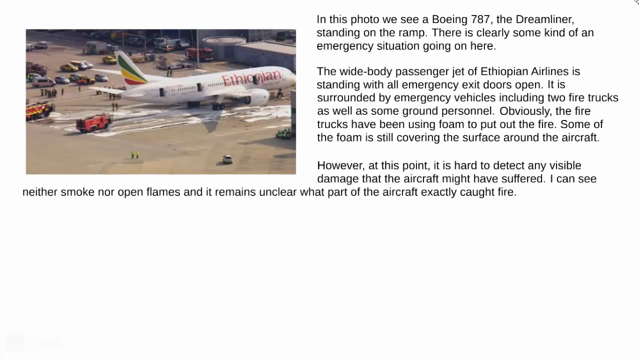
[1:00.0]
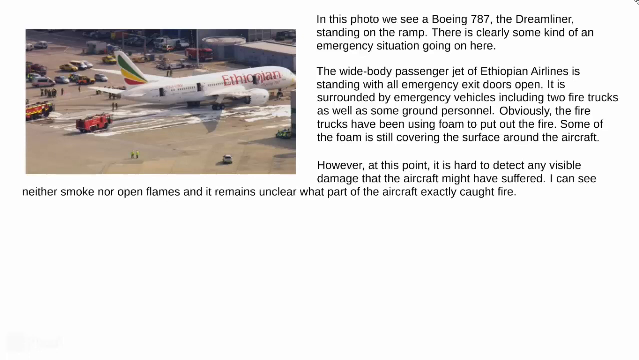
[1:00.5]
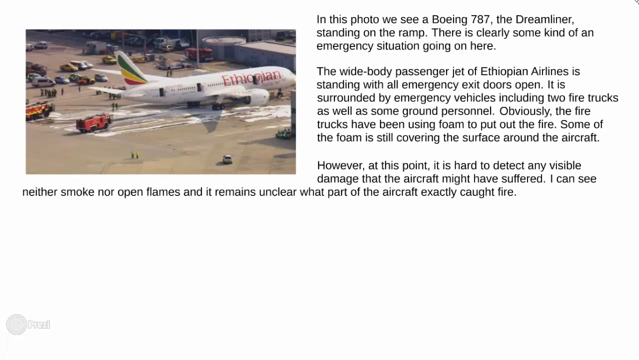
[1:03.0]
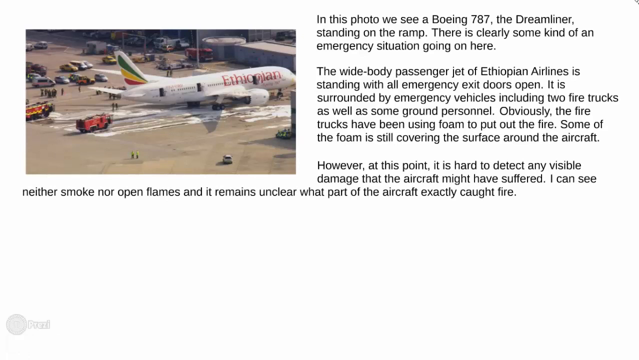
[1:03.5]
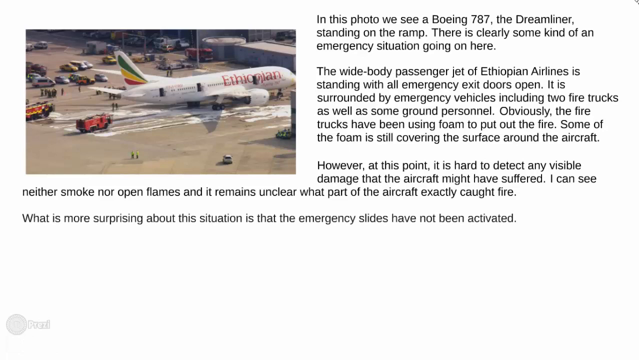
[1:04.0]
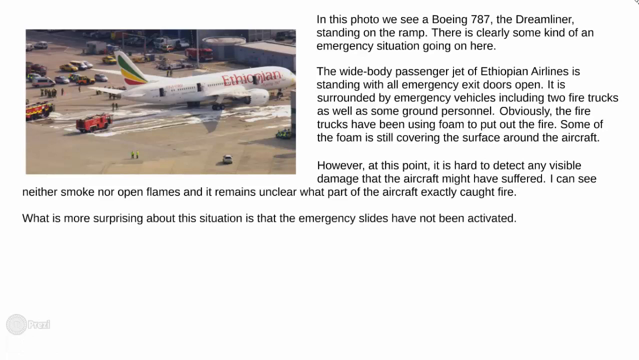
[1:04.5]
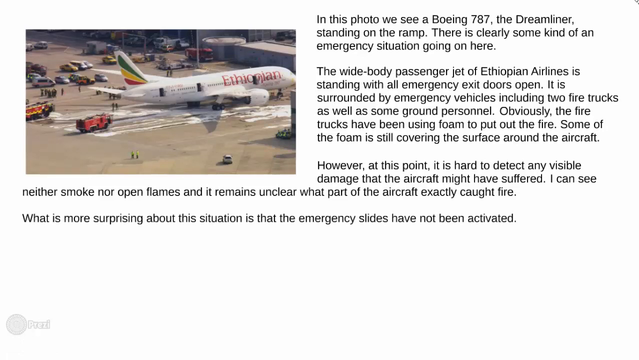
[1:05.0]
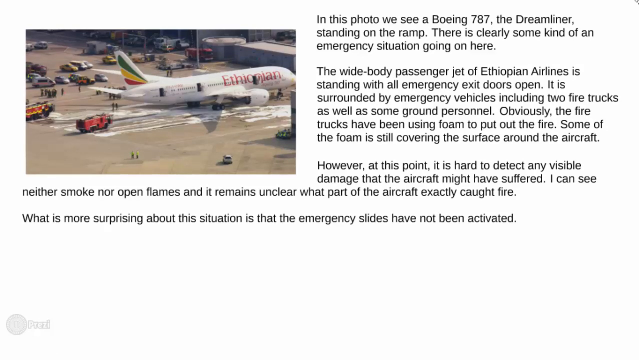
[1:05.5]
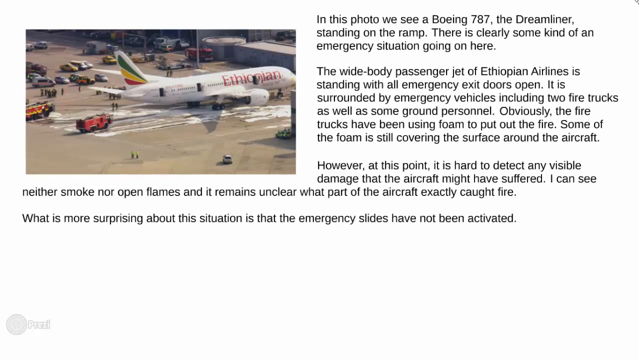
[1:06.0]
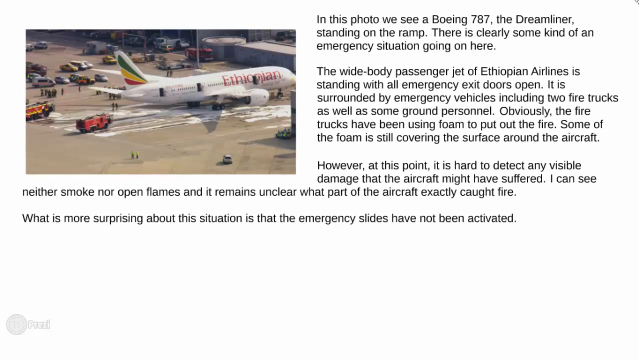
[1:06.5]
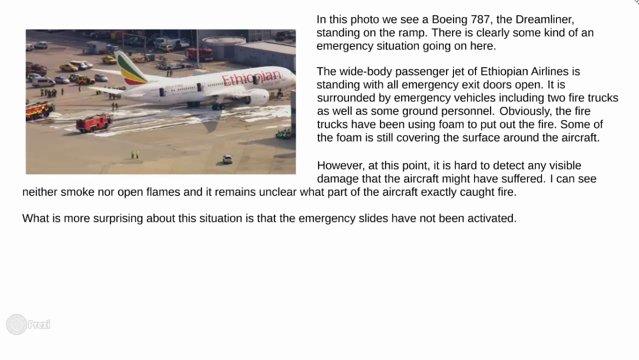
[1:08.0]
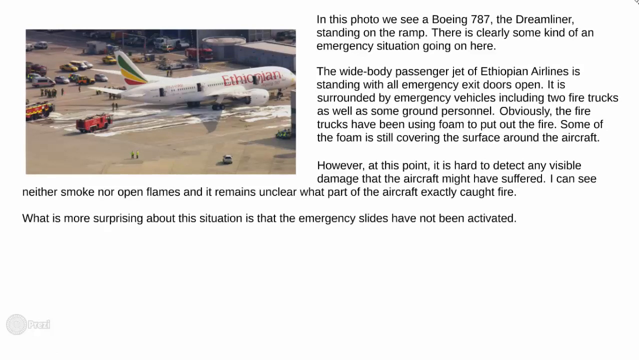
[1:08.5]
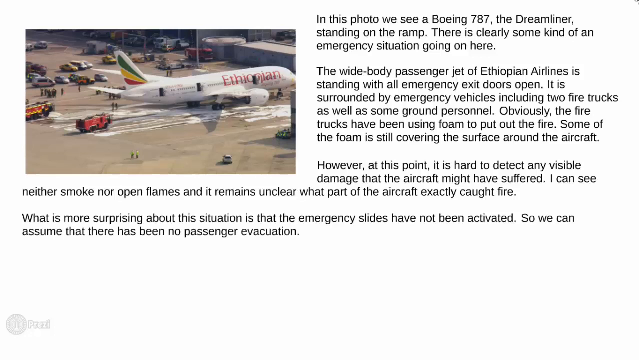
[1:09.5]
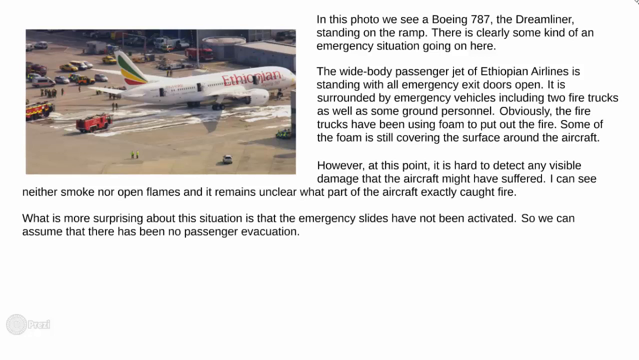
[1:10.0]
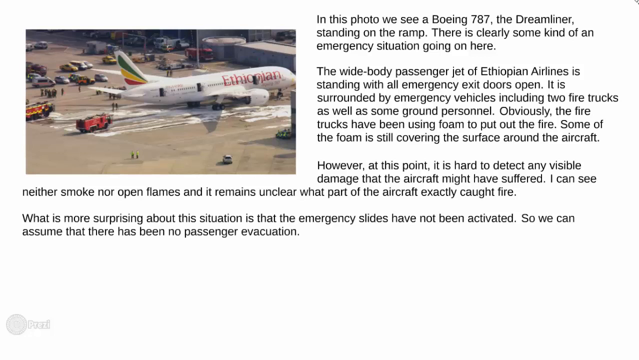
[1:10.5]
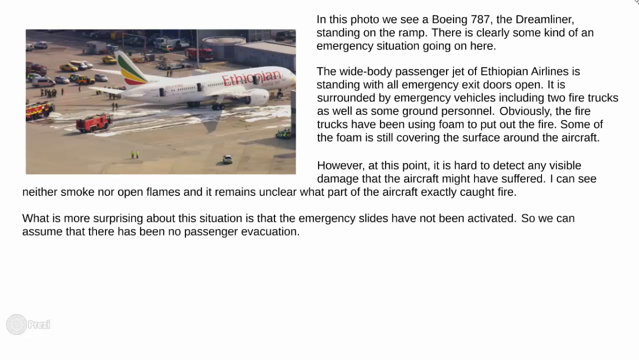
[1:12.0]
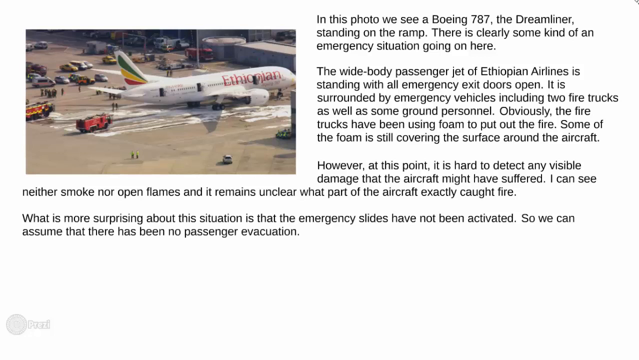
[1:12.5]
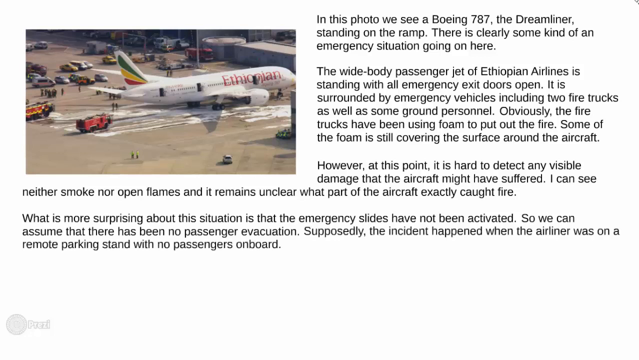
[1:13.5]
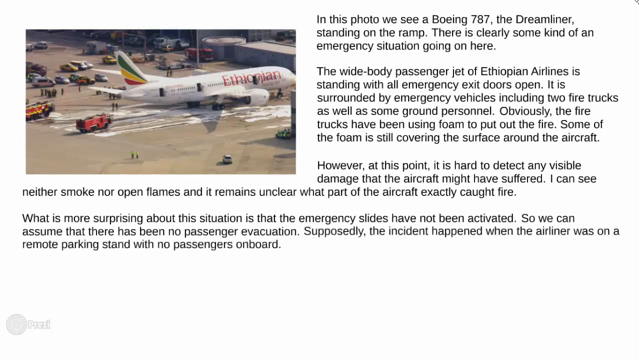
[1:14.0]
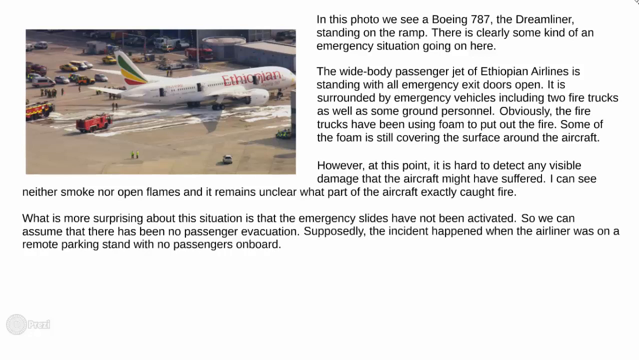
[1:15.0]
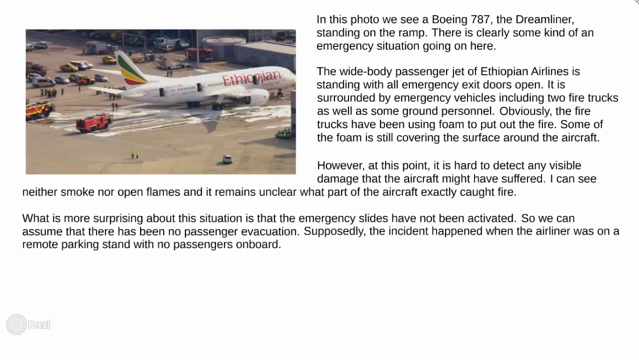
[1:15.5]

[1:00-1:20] The same picture of the airplane is in the upper left-hand corner, with more words next to it reading: "In this photo we see a Boeing 787 the Dreamliner standing on the ramp. There's clearly some kind of an emergency situation going on here. The wide-body passenger jet of Ethiopian Airlines is standing with all emergency exit doors open. It is surrounded by emergency vehicles including two fire trucks as well as some ground personnel. Obviously the fire trucks have been using foam to put out the fire. Some of the foam is still covering the surface around the aircraft. However, at this point it is hard to detect any visible damage that the aircraft might have suffered. I can see neither smoke nor open flames and it remains unclear what part of the aircraft exactly caught fire. What is more surprising about the situation is that the emergency slides have not been activated so we can assume that there has been no passenger evacuation. Supposedly the incident happened when the airliner was on a remote parking stand with no passengers on board."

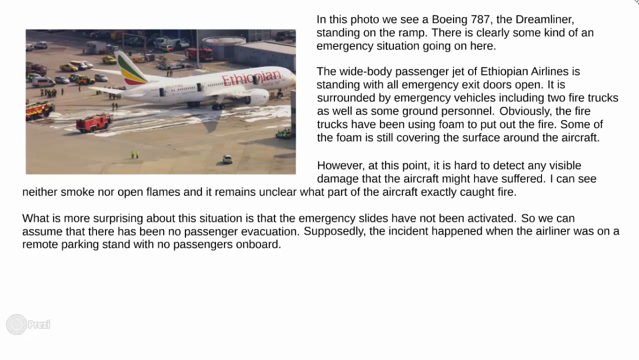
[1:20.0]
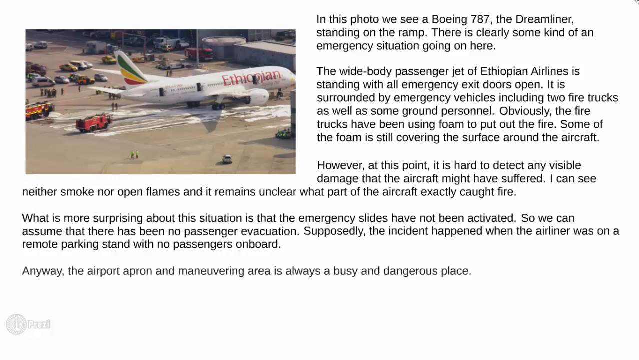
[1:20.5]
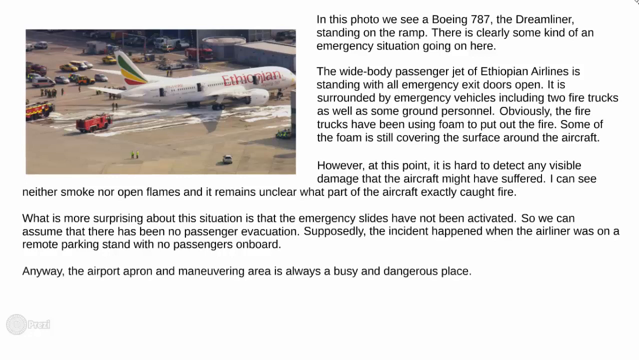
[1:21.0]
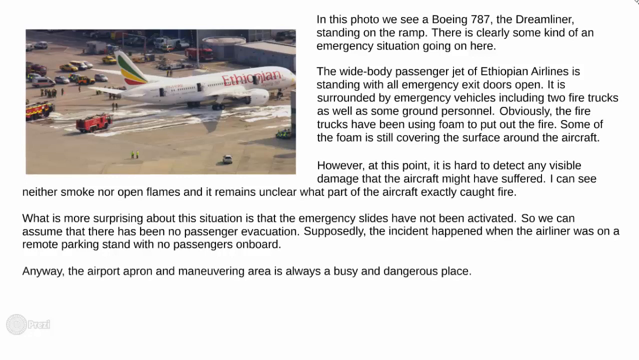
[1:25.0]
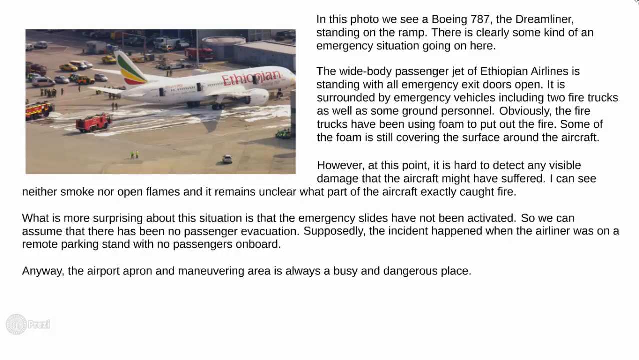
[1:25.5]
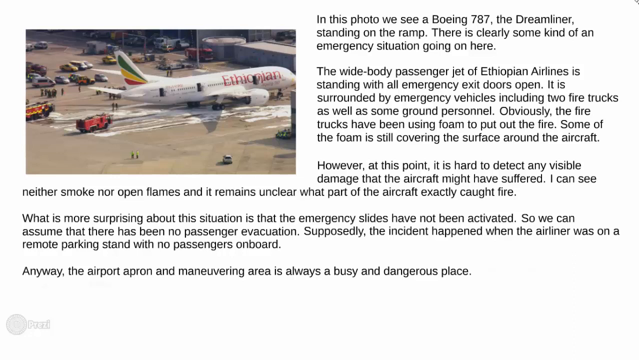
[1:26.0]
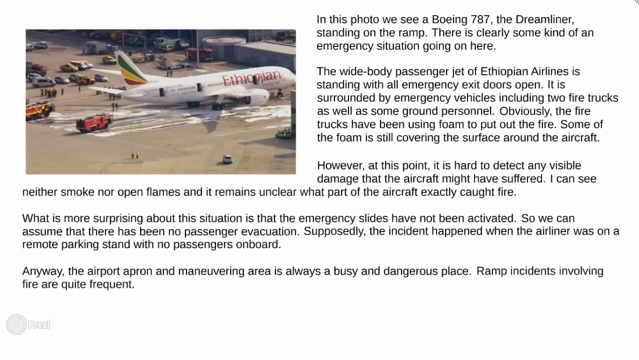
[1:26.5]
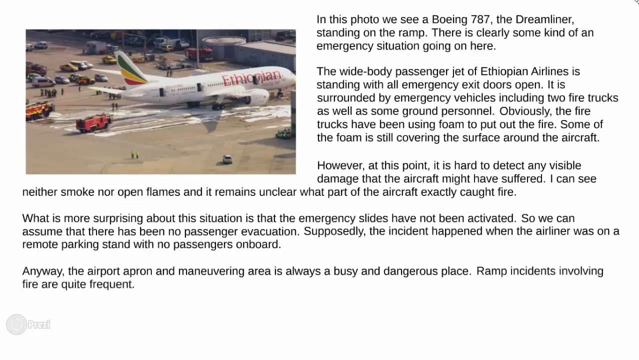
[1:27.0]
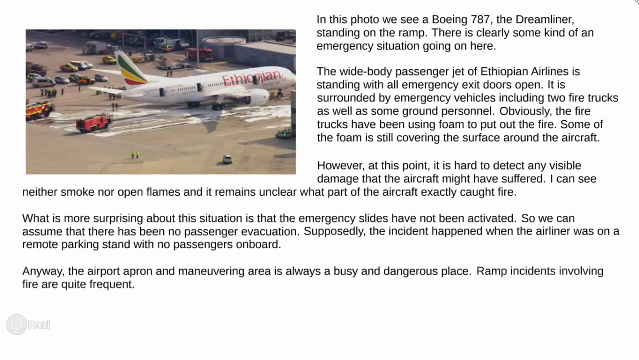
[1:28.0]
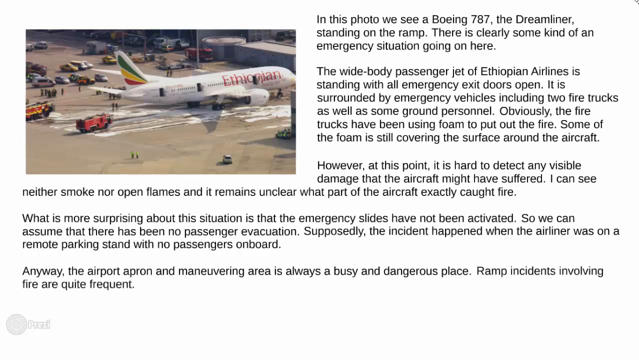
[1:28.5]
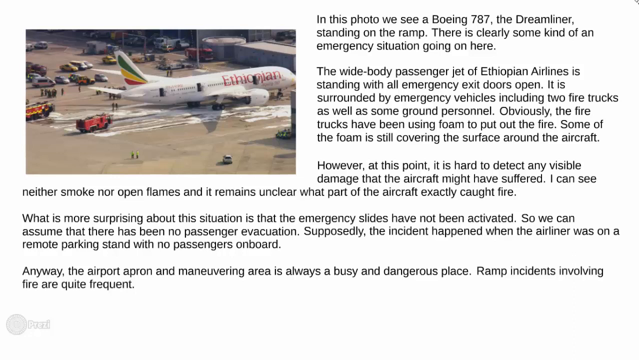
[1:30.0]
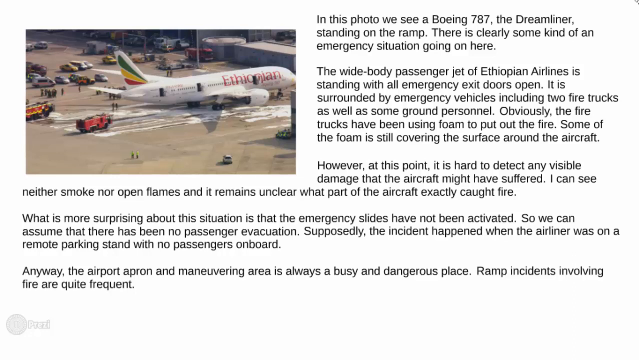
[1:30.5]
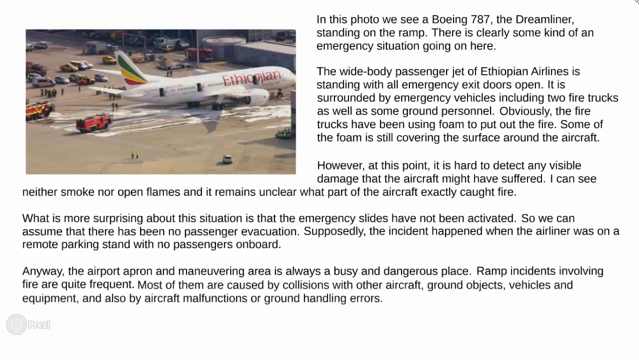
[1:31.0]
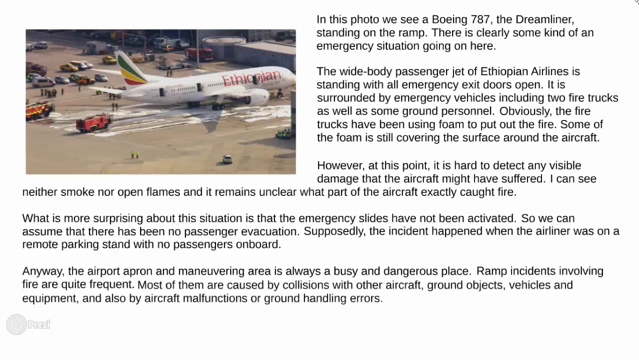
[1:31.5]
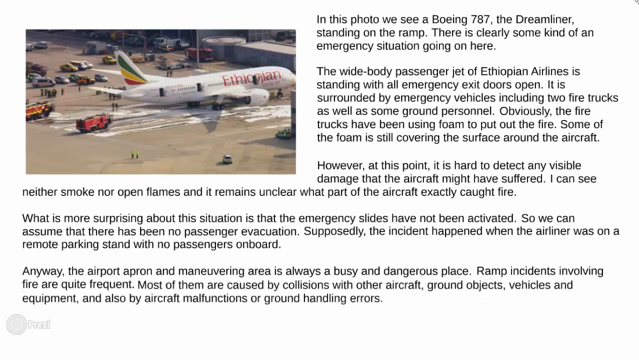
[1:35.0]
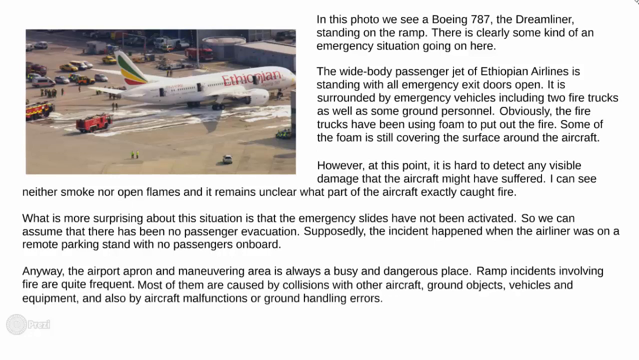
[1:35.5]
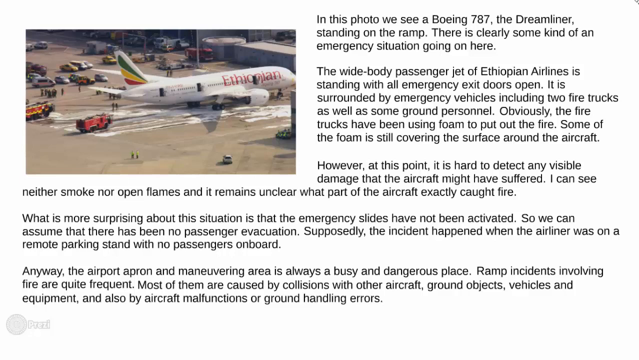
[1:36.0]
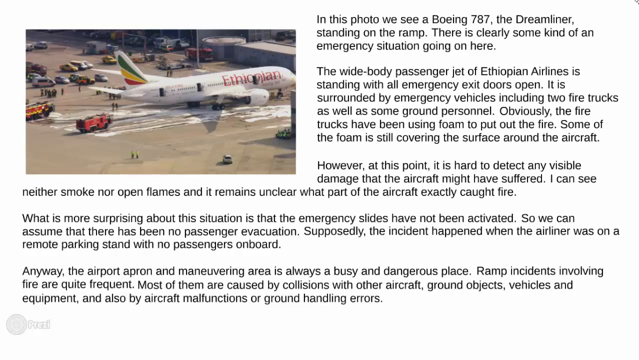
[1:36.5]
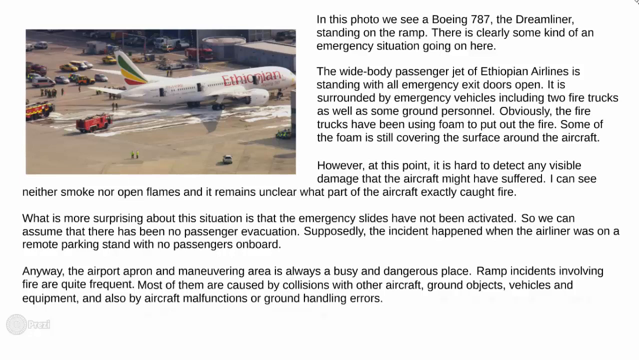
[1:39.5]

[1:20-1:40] More words appear on the screen next to the picture of the plane in the upper left-hand corner. The new words include: "What is more surprising about the situation is that the emergency slides have not been activated so we can assume that there has been no passenger evacuation. Supposedly the incident happened when the airliner was on a remote parking stand with no passengers on board. Anyway, the airport apron and maneuvering area is always a busy and dangerous place." and "Most of them are caused by collisions with other aircraft, ground objects, vehicles and equipment and also by aircraft malfunctions or ground handling errors." The background is white and the new words are black. The video is rectangular.